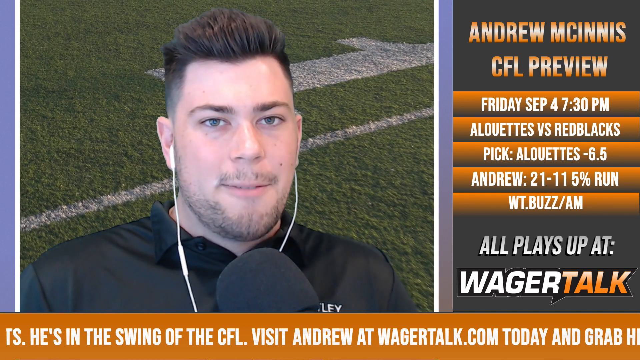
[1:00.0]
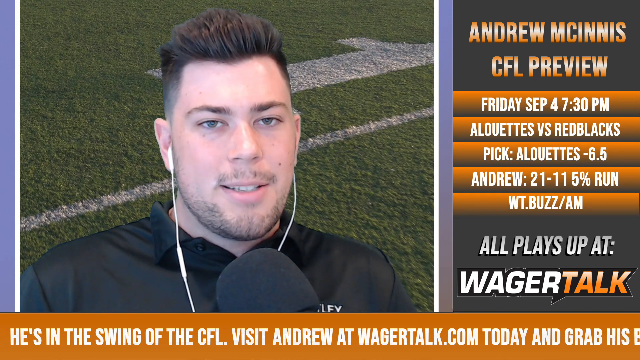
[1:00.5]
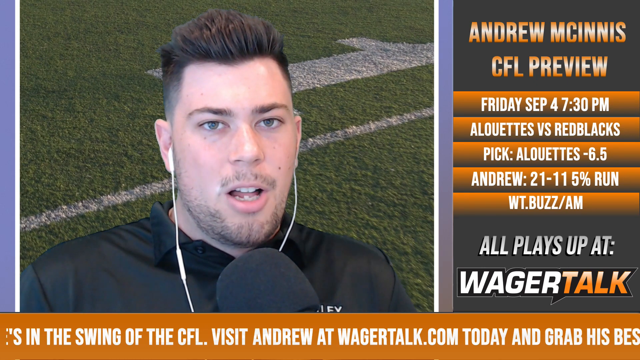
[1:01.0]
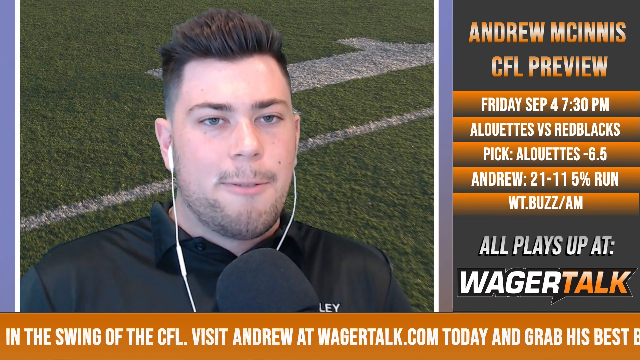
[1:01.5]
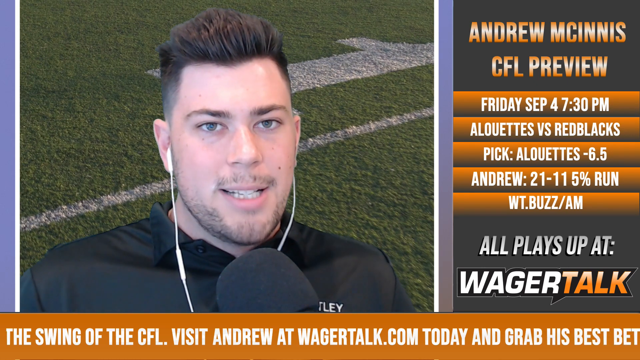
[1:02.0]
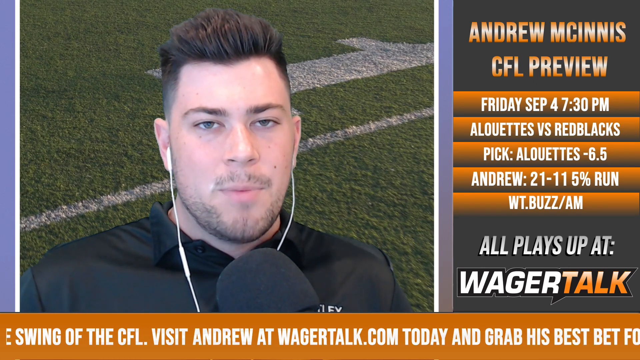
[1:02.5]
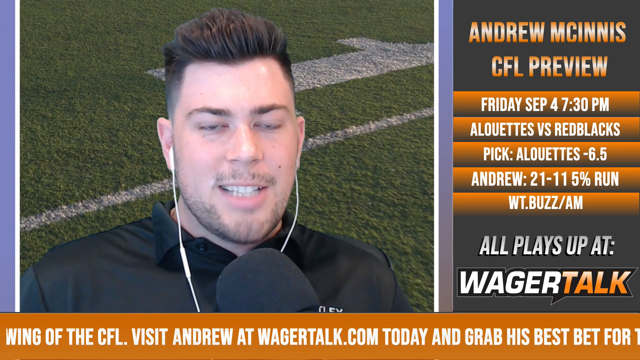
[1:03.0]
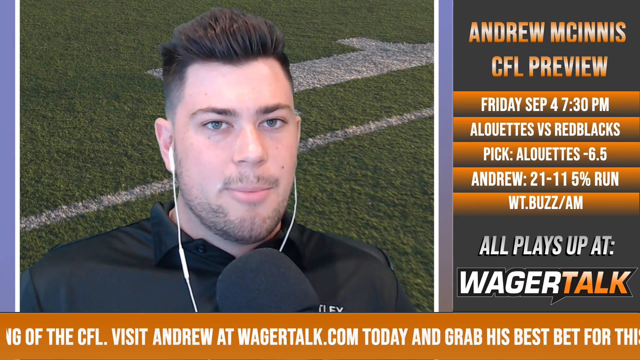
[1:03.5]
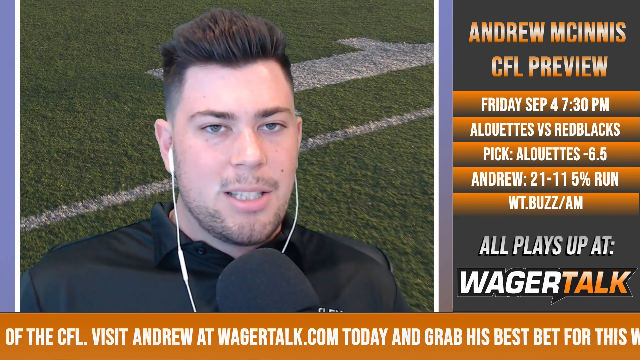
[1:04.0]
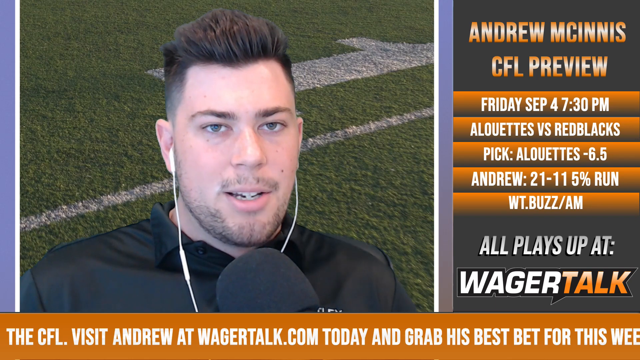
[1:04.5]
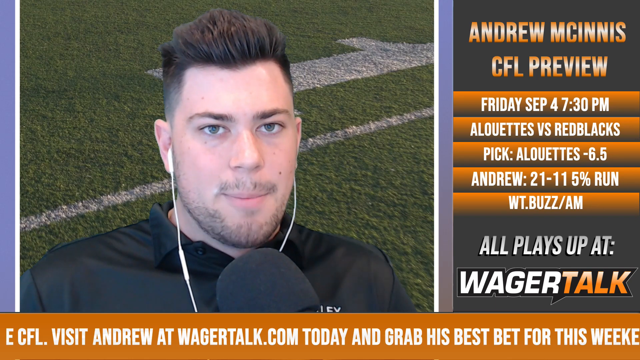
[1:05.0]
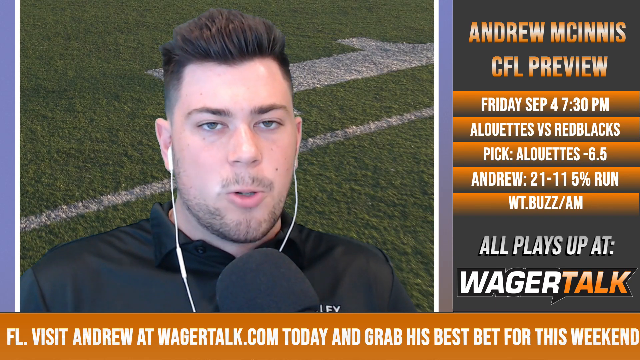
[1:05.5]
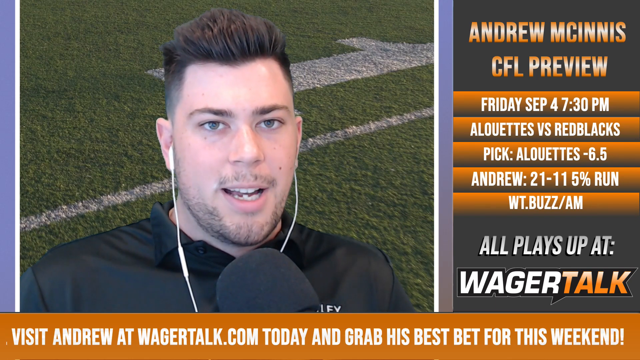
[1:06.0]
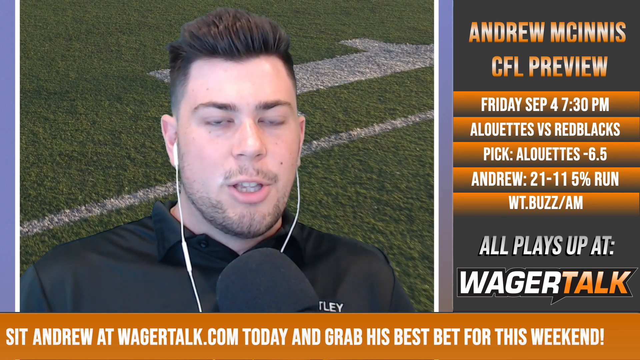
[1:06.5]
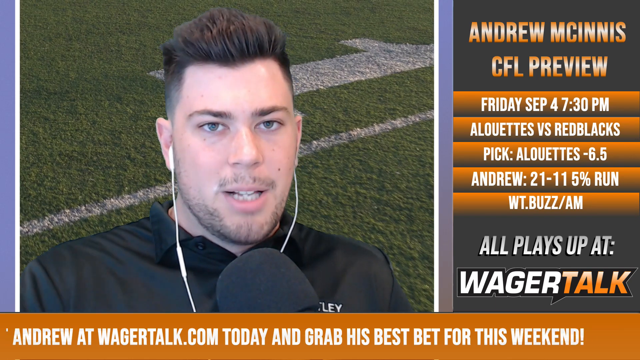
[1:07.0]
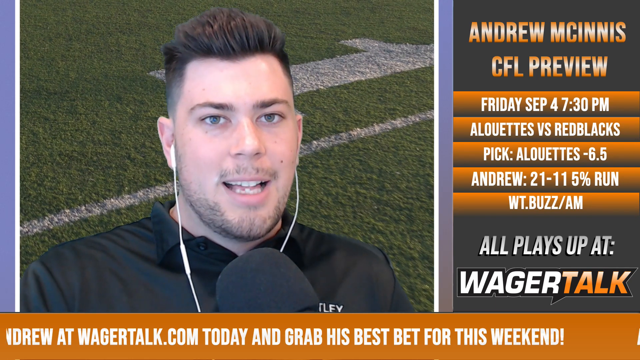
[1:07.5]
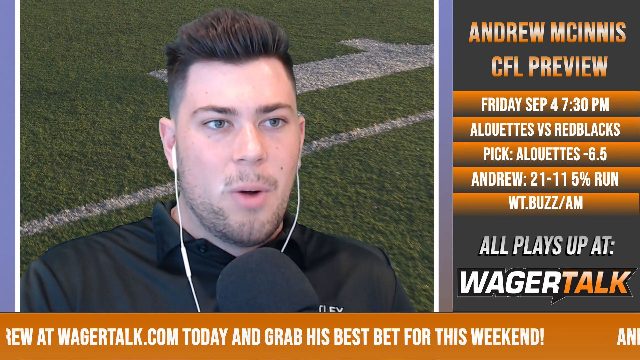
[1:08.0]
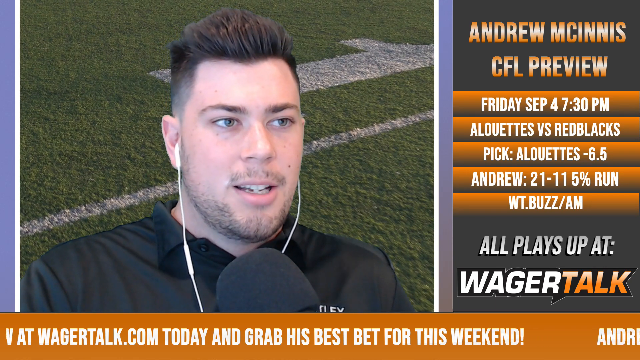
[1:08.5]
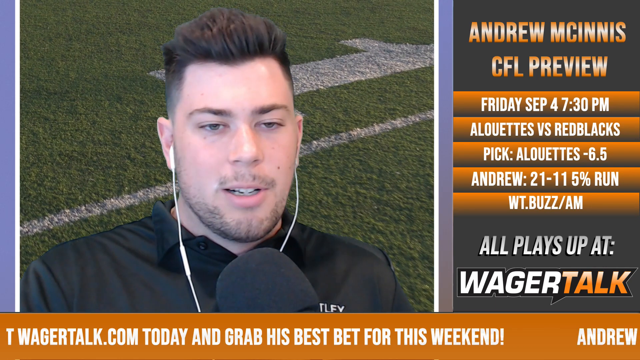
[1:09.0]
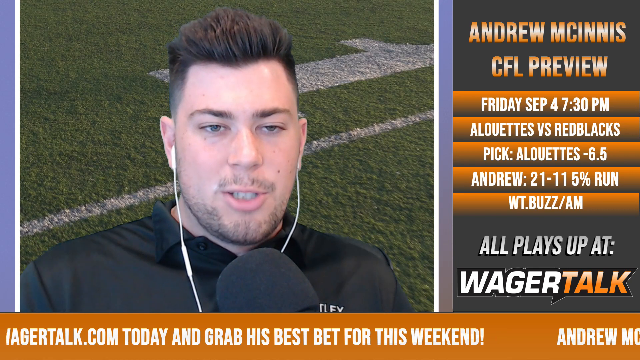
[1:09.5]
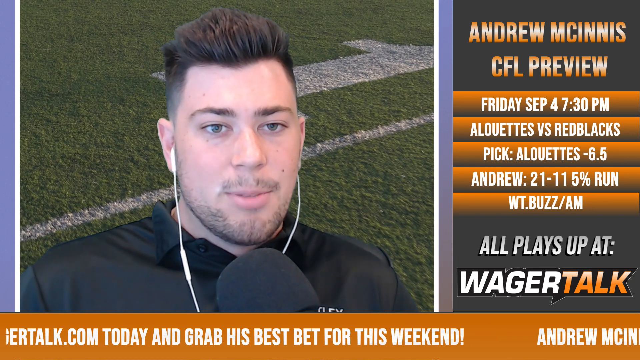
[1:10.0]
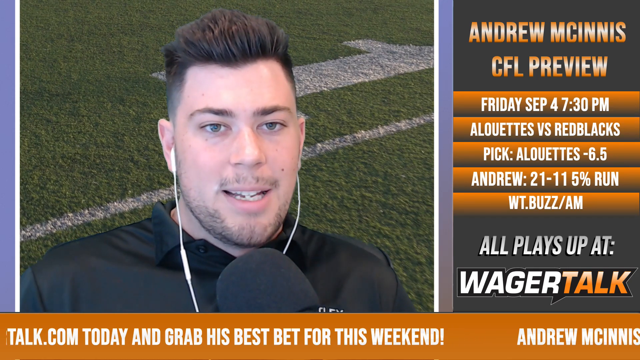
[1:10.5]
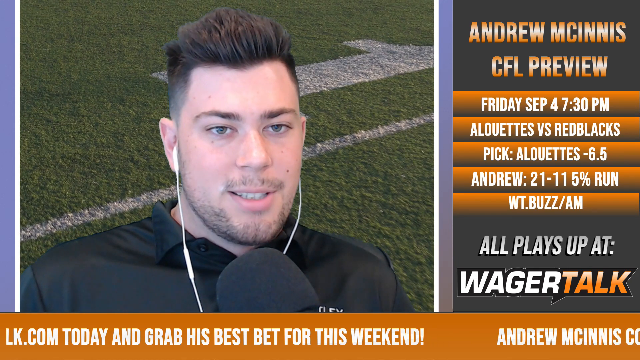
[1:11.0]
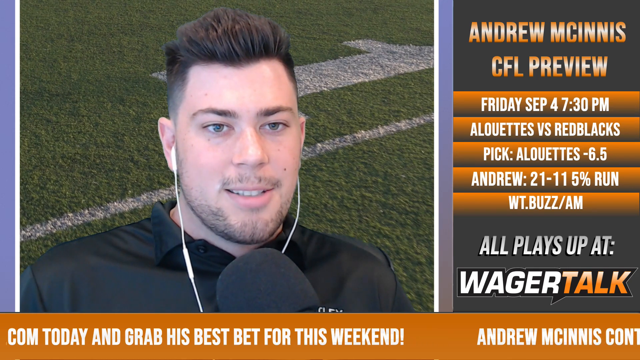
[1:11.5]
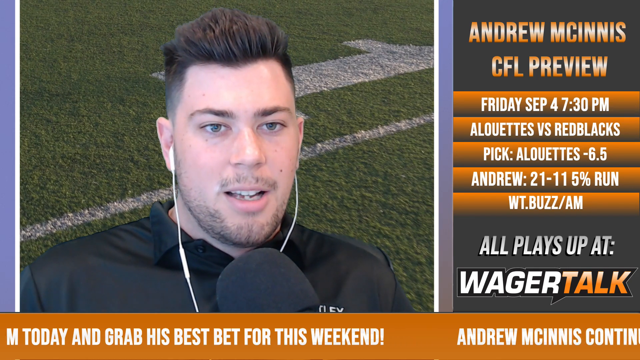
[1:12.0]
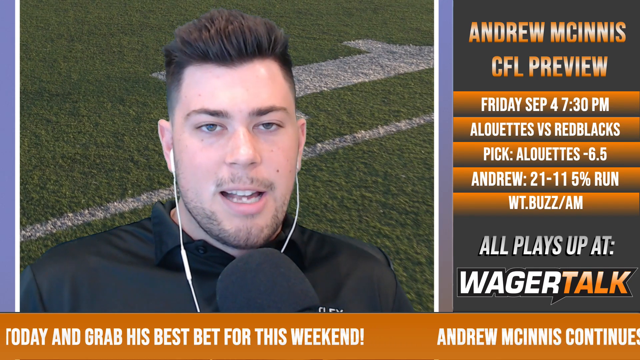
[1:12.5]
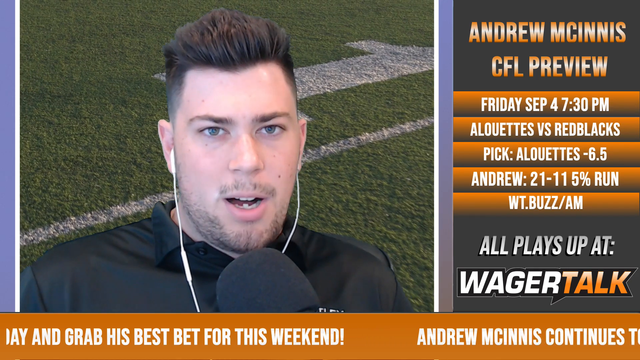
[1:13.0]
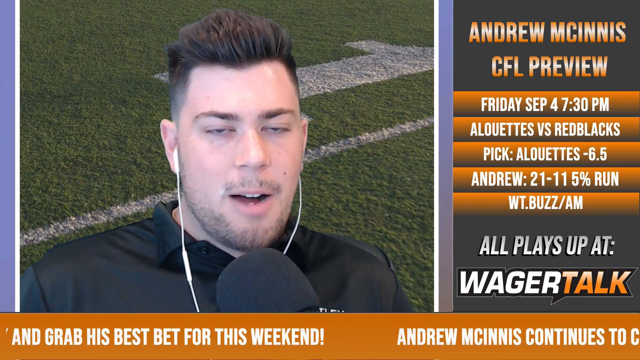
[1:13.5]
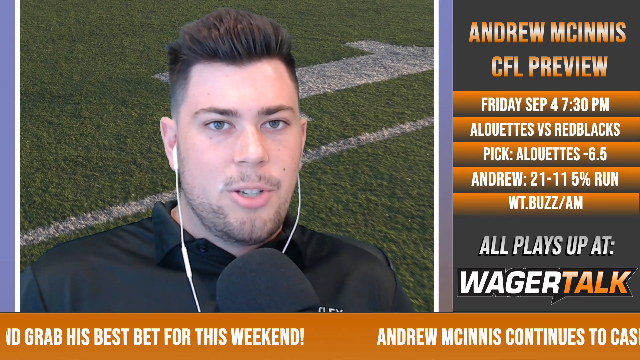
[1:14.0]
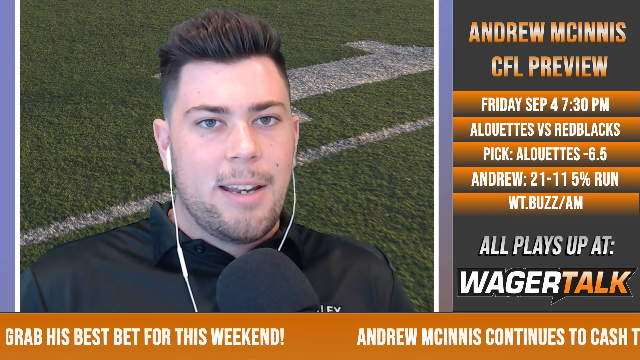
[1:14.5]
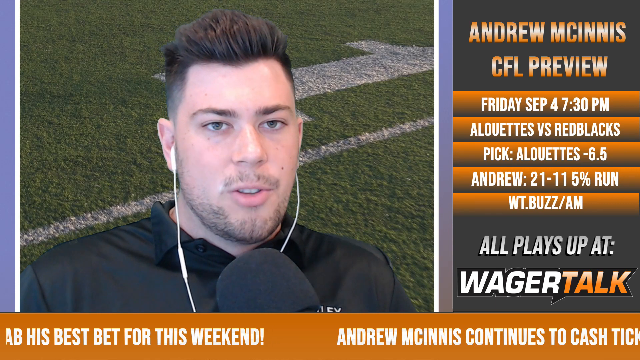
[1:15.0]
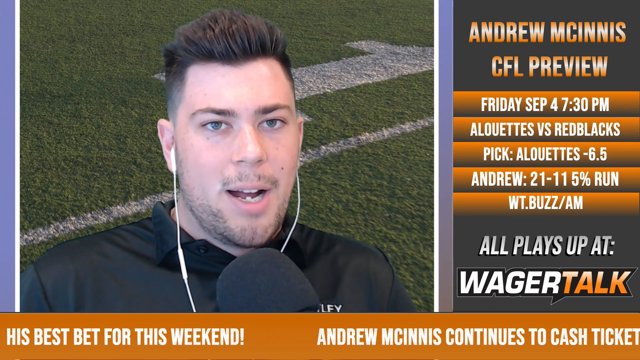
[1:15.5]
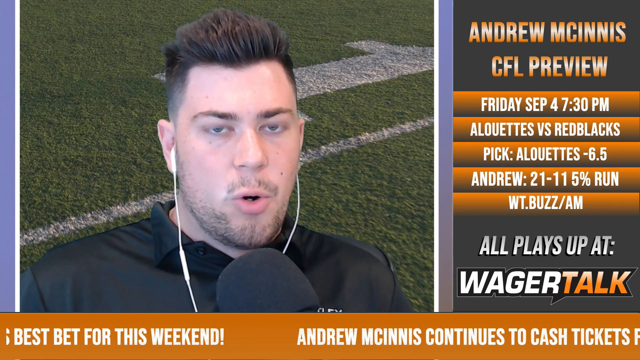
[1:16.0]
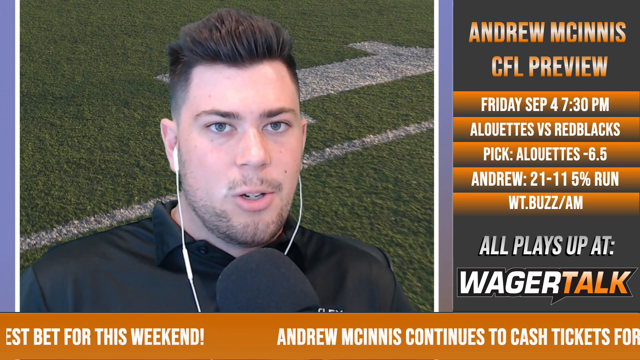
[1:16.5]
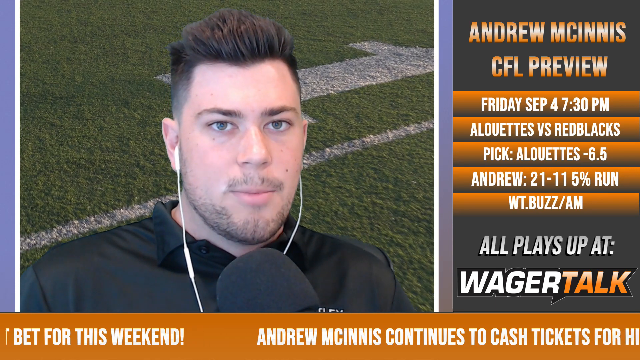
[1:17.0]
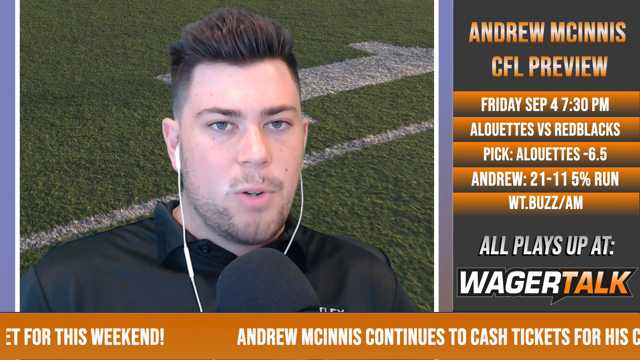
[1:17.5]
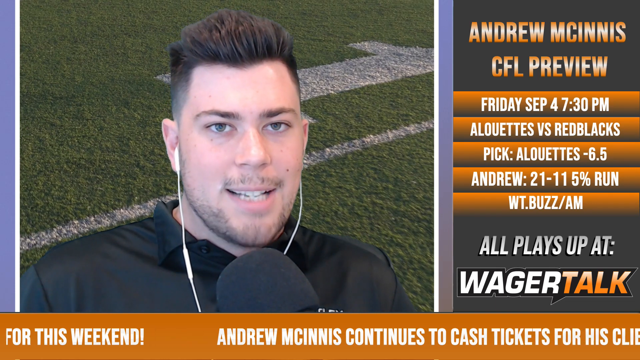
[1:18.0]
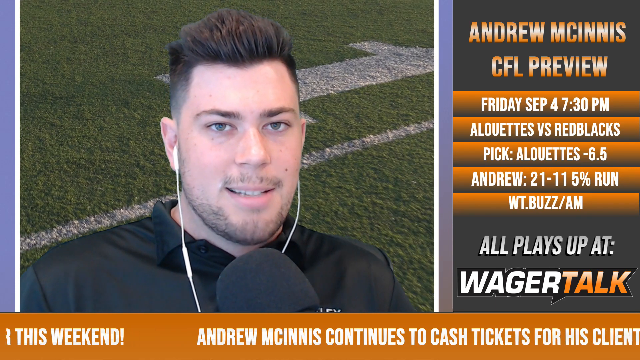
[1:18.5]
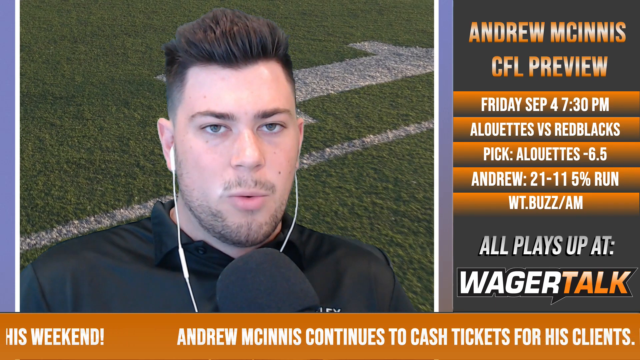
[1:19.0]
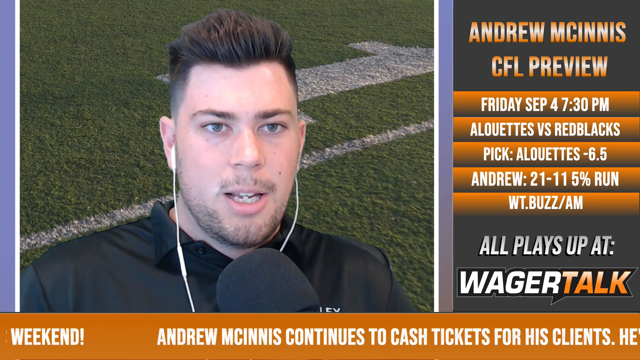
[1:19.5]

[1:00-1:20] A man is talking about what appears to be football. His very front bottom tooth looks pushed backwards and misaligned compared to the rest of his teeth. He has a sparse stubbly beard and mustache that is not very filled in. On the left side of his face, between his lip and nose on his left cheek, there appears to be a mole. His straight brown hair is very short on the sides, almost like a fade, with a taller top. He wears a polyester black shirt with a collar and buttons and has headphones in. A black microphone with a very large foam covering is in front of him. An orange bar runs across the bottom with words scrolling to the left.